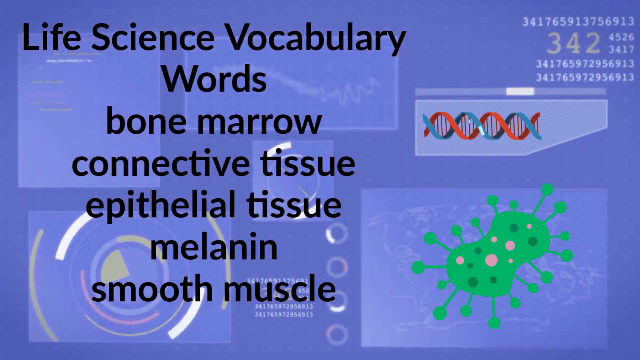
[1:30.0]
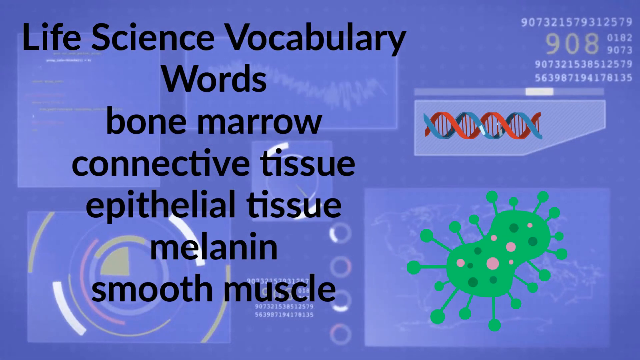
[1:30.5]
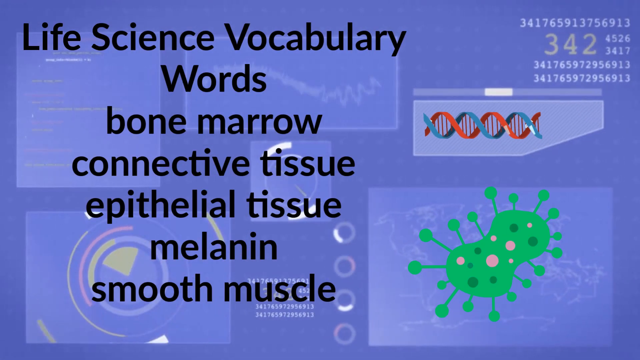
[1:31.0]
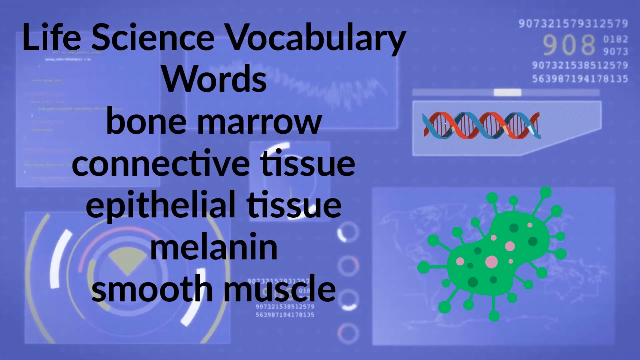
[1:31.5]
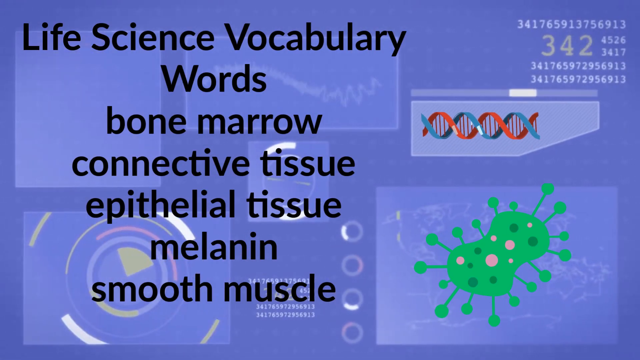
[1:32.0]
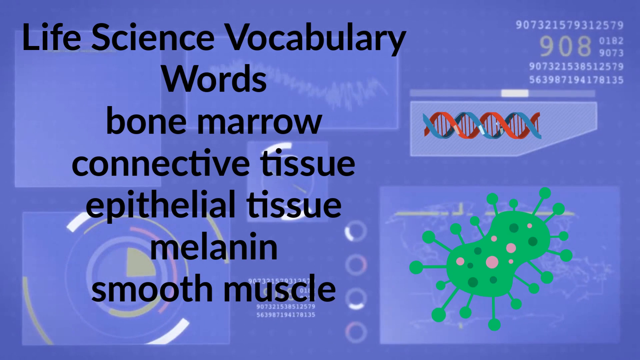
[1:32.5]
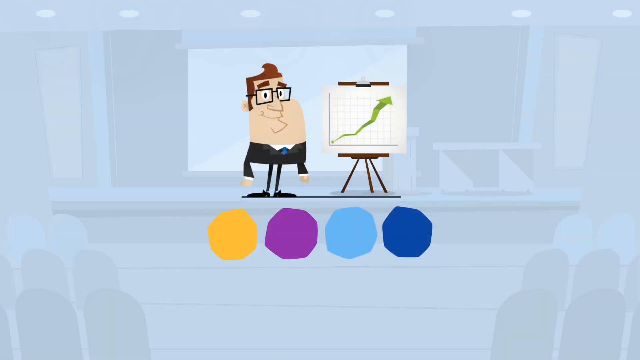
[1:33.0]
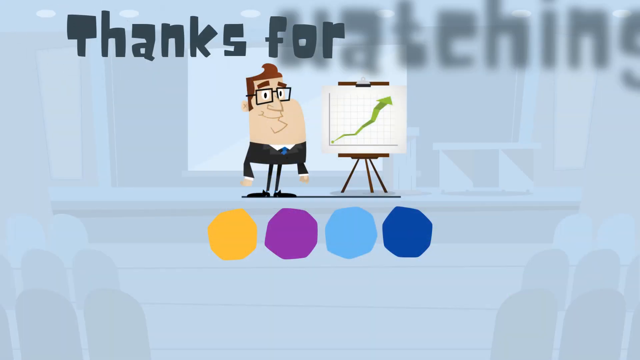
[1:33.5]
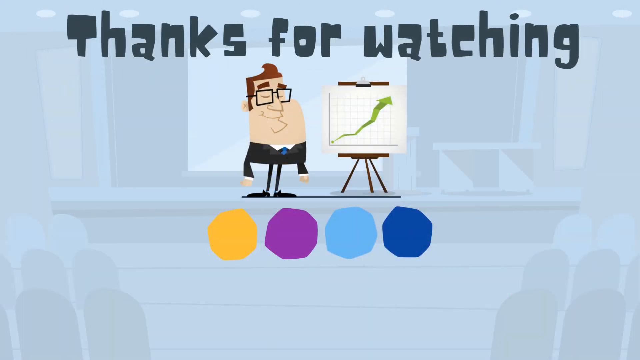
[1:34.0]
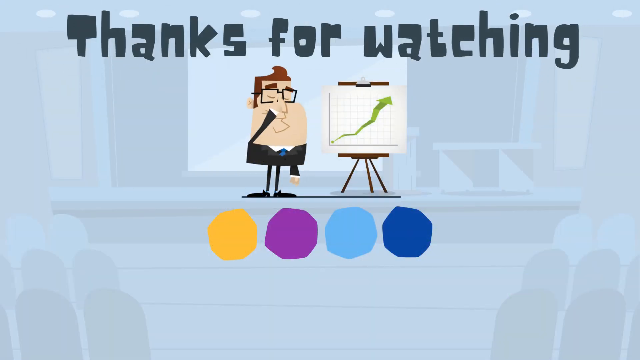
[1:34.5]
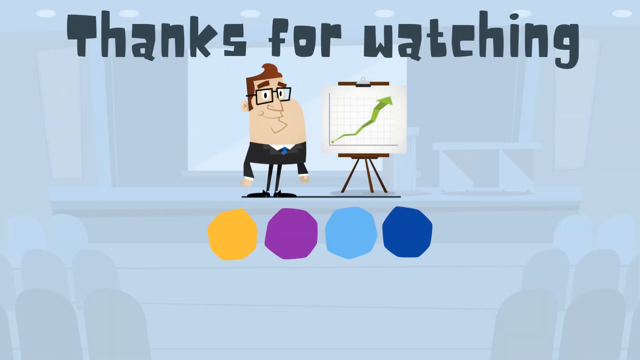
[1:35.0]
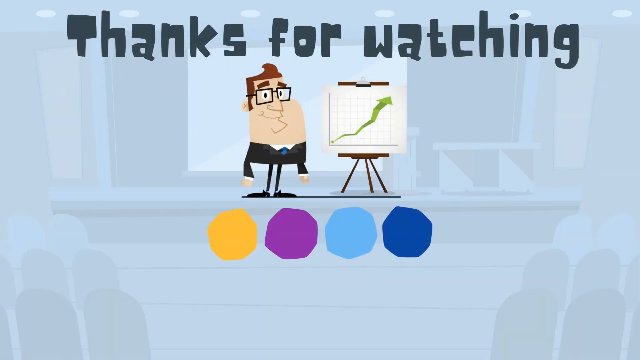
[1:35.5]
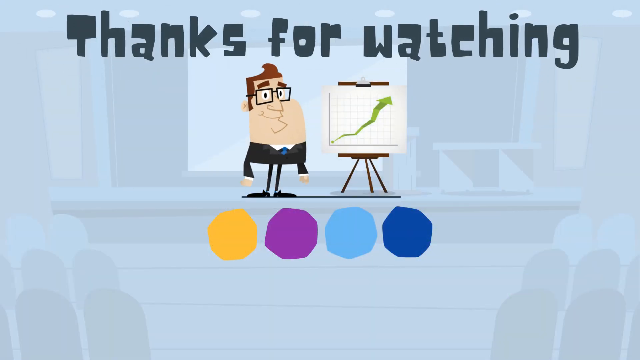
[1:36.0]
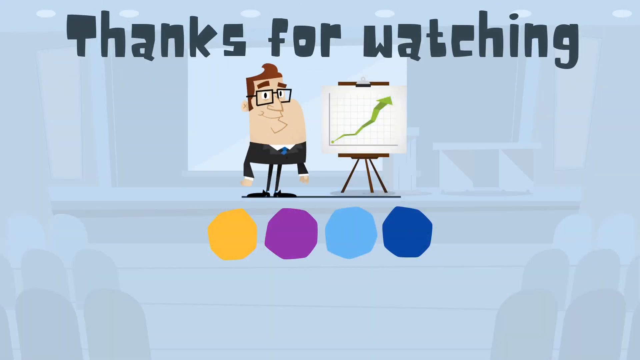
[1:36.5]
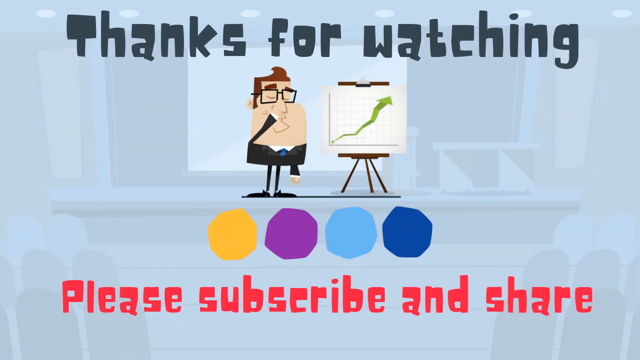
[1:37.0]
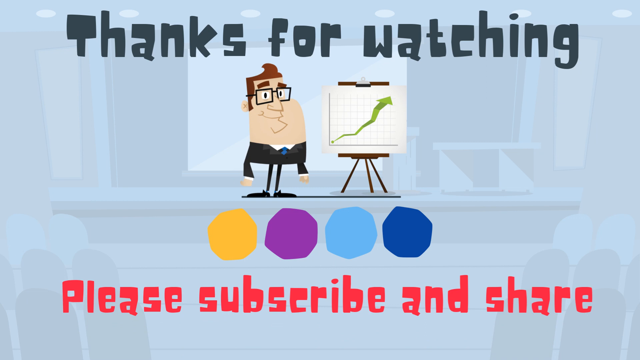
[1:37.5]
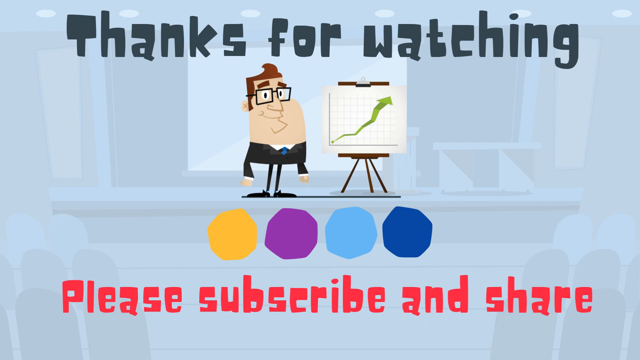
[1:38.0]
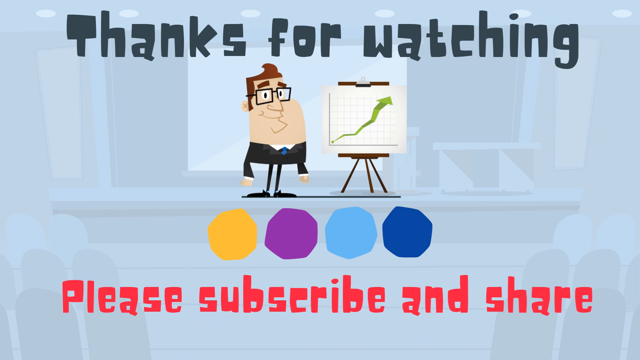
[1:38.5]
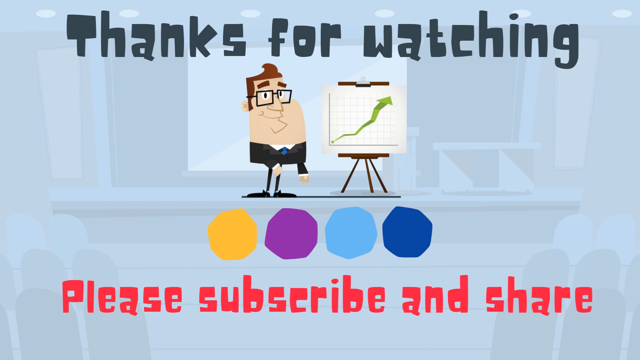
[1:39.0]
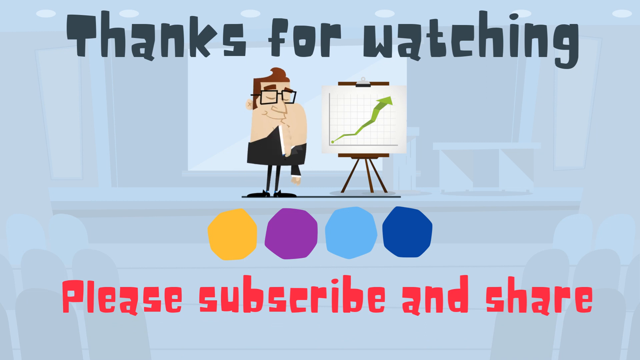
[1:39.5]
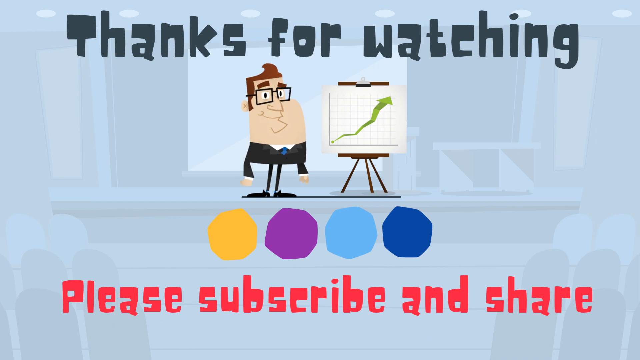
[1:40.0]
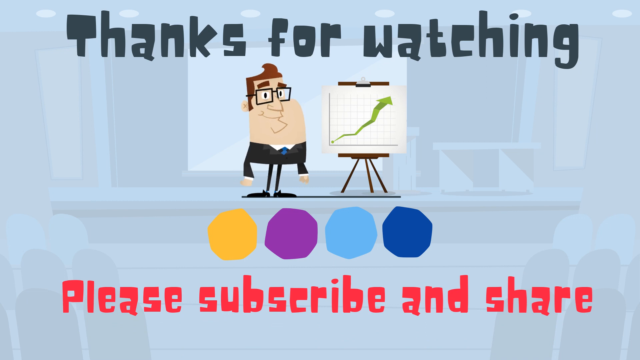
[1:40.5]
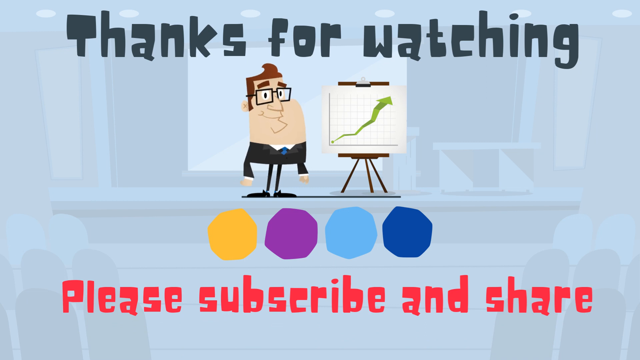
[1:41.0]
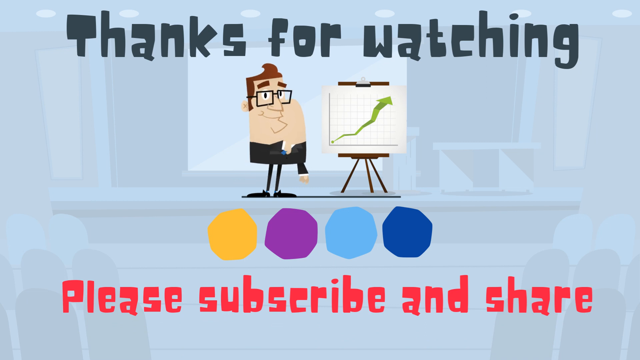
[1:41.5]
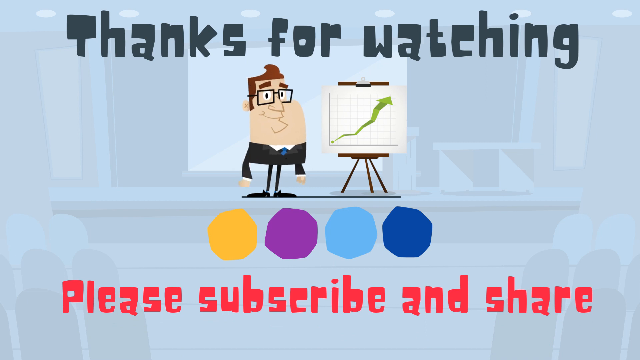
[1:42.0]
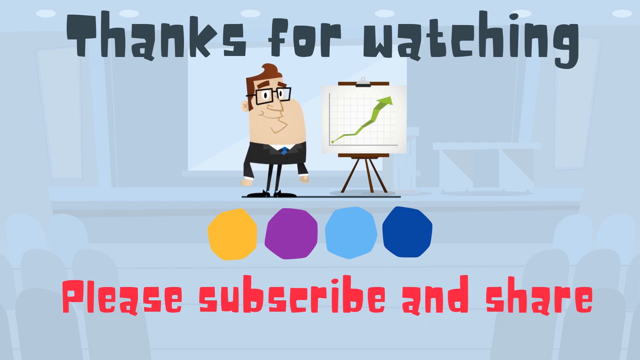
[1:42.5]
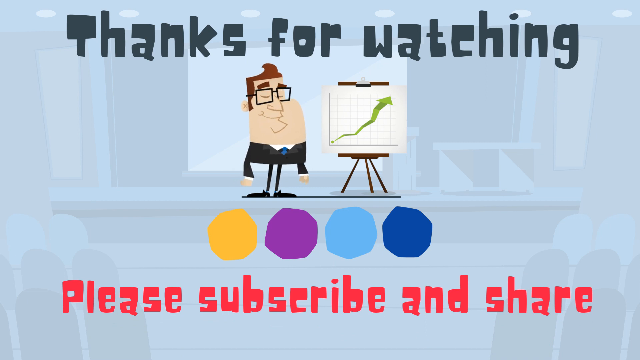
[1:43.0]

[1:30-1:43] A cartoon bacterium, a cartoon DNA double helix, charts, graphs, reports, and changing numbers fill the background, while in the front the text reads "life science vocabulary words" followed by bone marrow, connective tissue, epithelial tissue, melanin, and smooth muscle. The scene then changes to a cartoon professor wearing glasses and standing in front of a chart with an arrow pointing up. At the top he says "thanks for watching," and at the very bottom, "please subscribe and share." Meanwhile, the professor keeps holding up his glasses as they keep falling down a little. Above the words "please subscribe and share" are four polygons in different colors, from the left: yellow, purple, light blue, and dark blue. The background of this ending scene resembles a classroom, perhaps a science room.